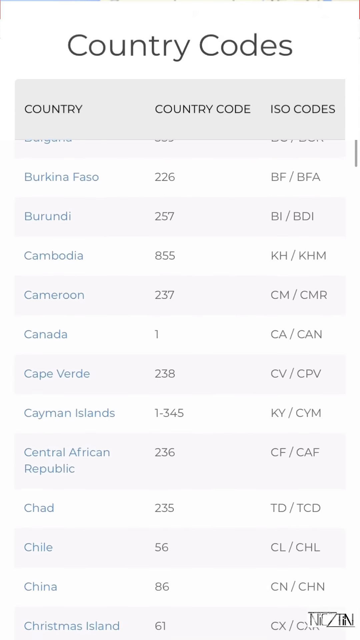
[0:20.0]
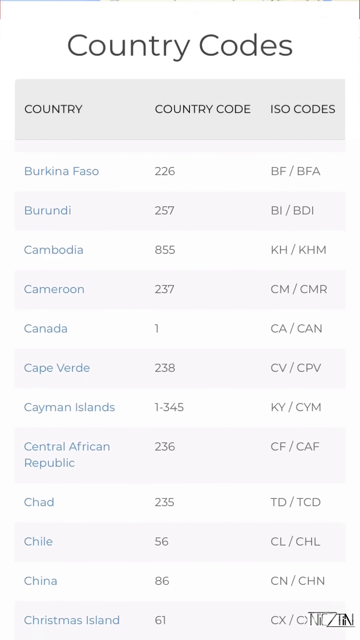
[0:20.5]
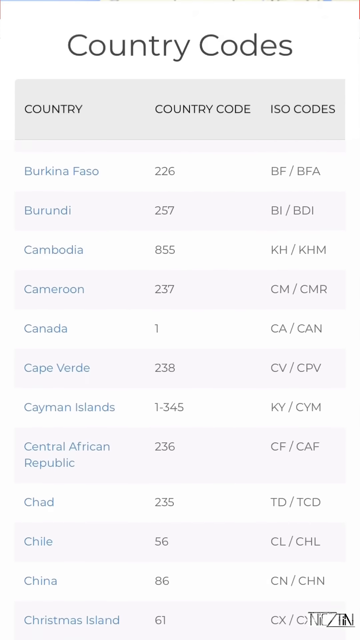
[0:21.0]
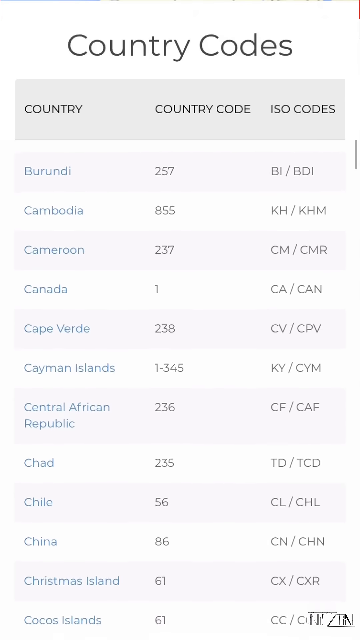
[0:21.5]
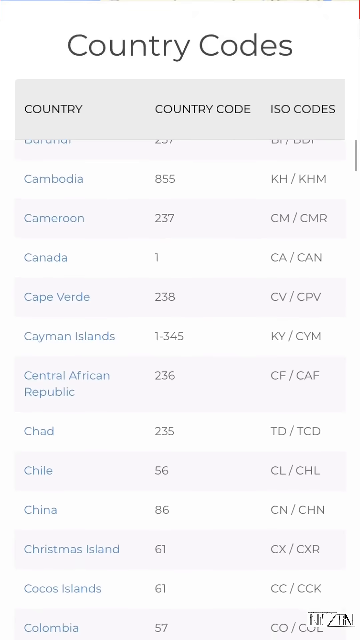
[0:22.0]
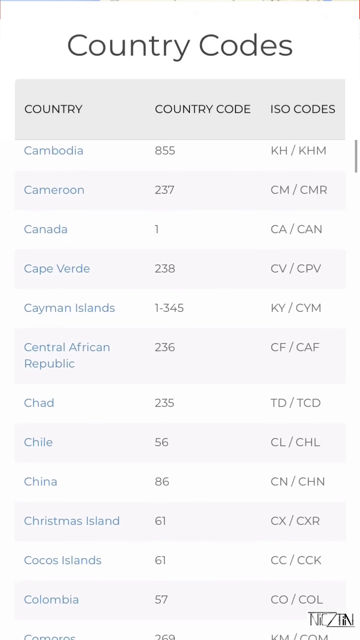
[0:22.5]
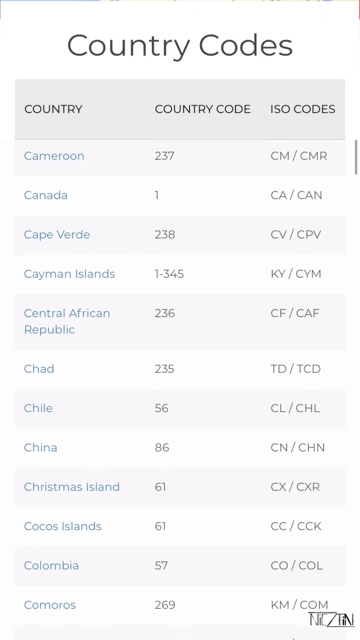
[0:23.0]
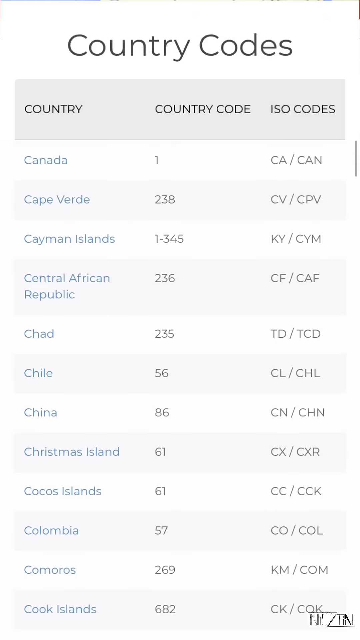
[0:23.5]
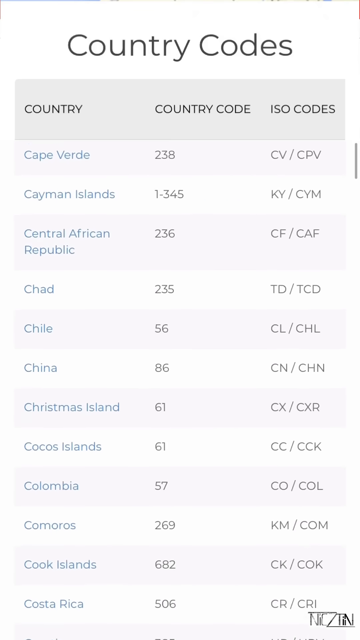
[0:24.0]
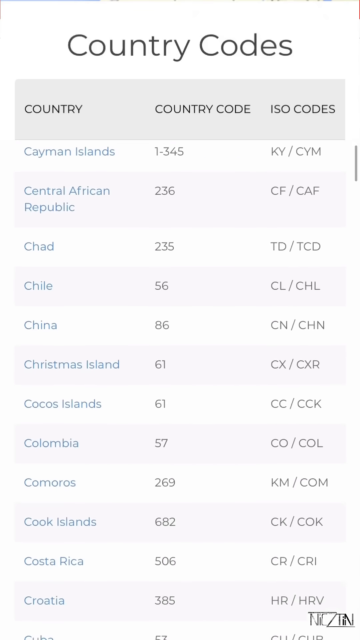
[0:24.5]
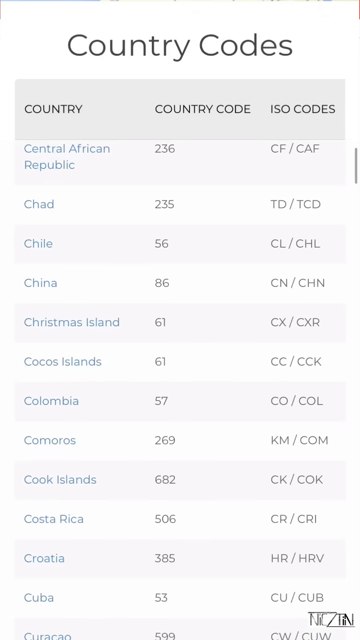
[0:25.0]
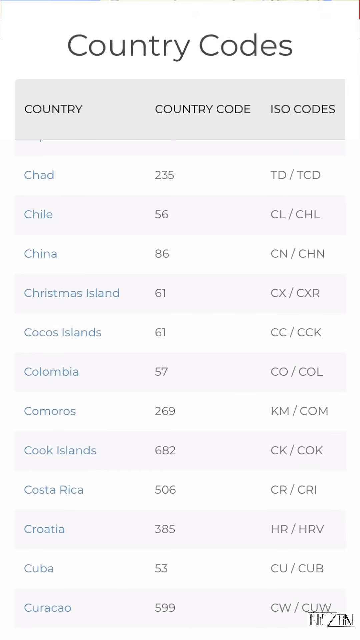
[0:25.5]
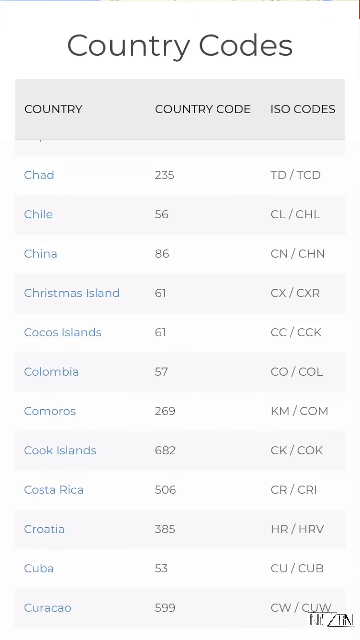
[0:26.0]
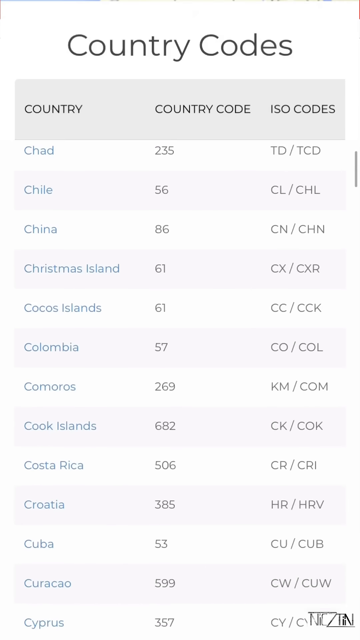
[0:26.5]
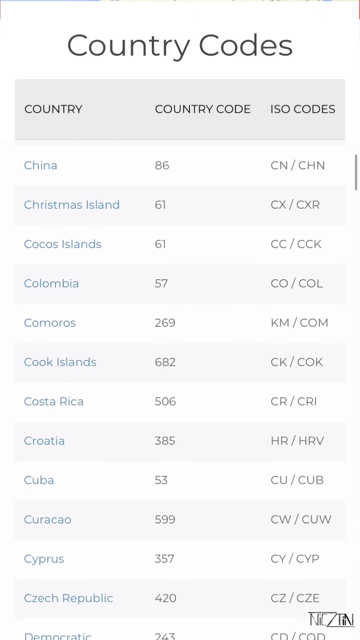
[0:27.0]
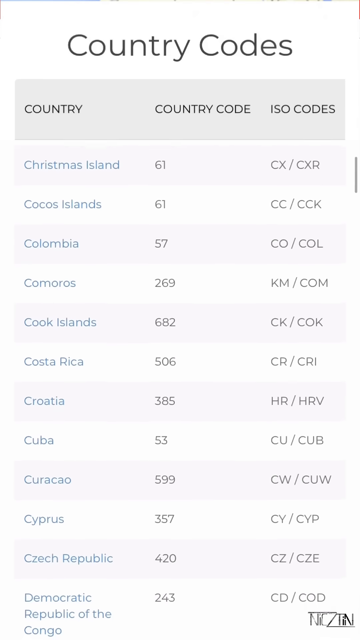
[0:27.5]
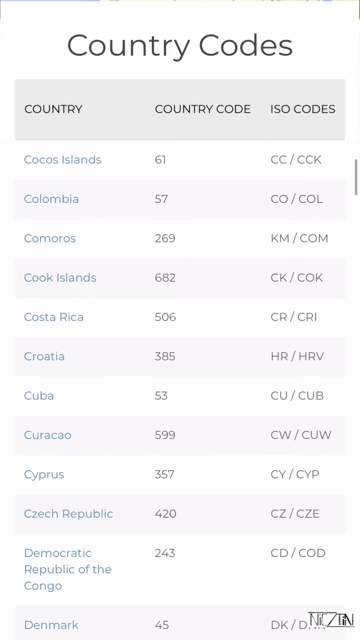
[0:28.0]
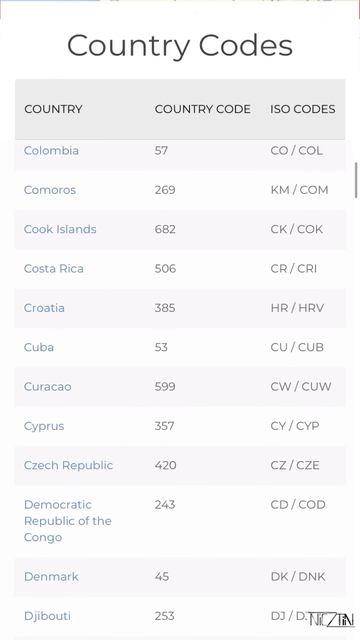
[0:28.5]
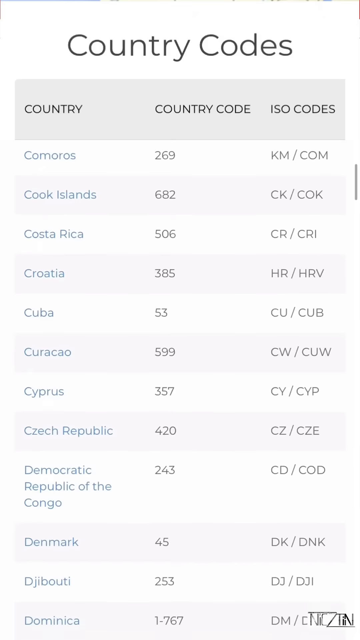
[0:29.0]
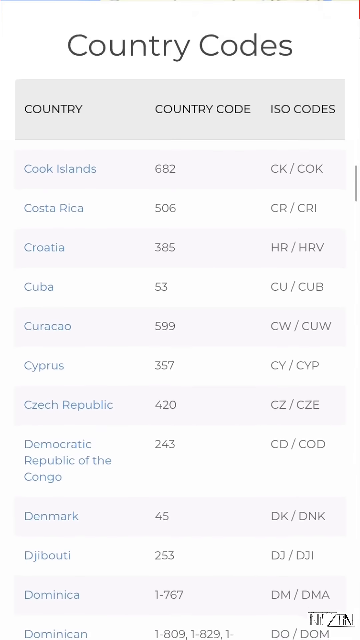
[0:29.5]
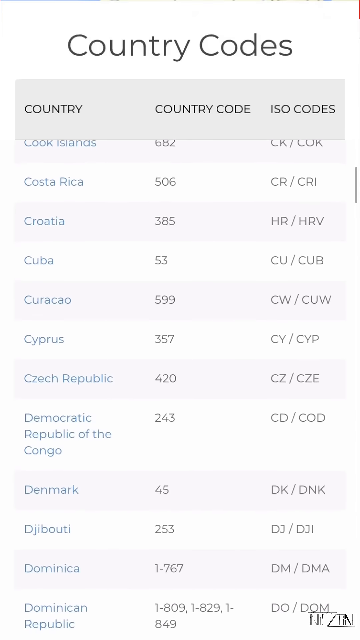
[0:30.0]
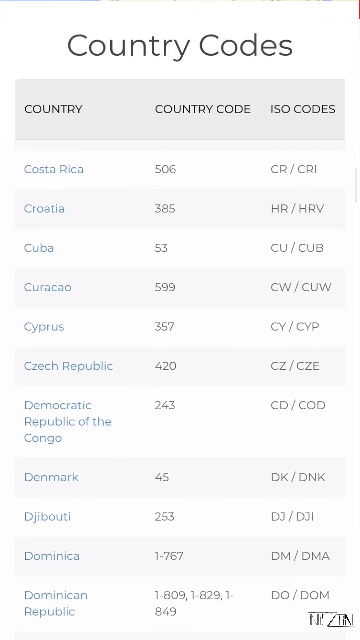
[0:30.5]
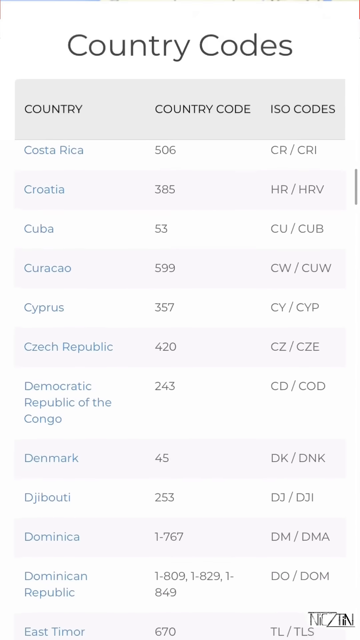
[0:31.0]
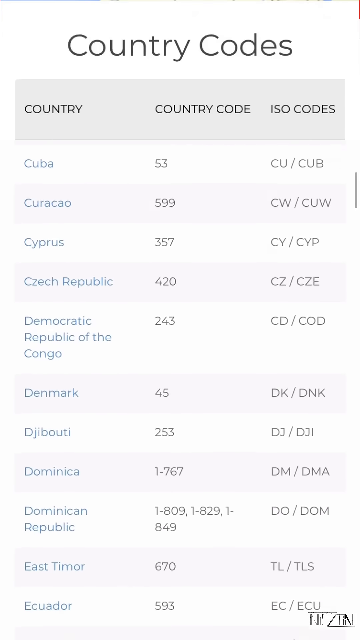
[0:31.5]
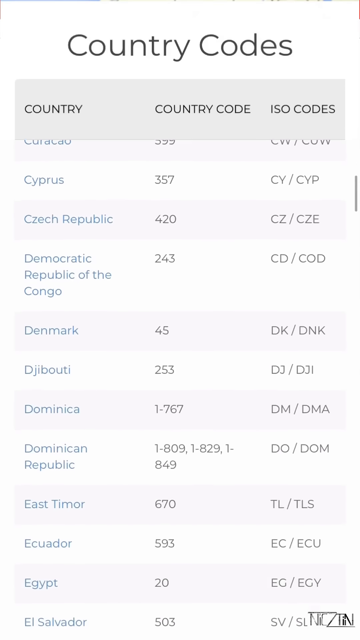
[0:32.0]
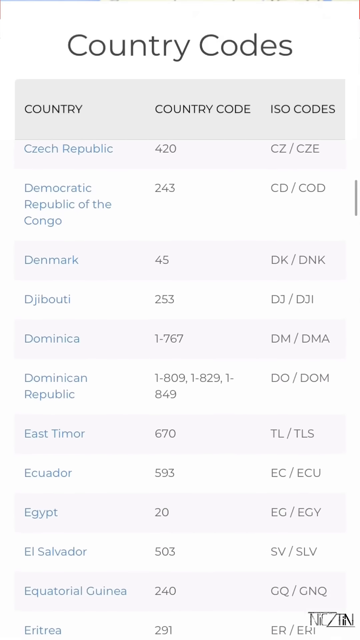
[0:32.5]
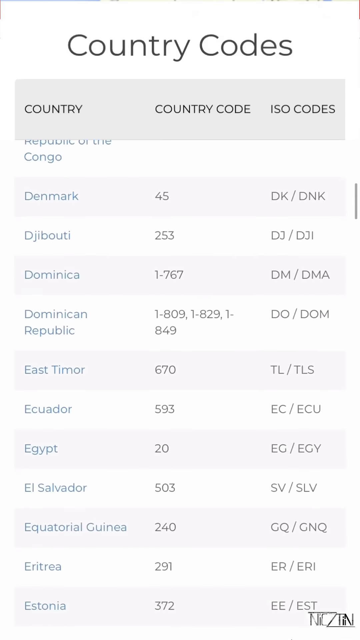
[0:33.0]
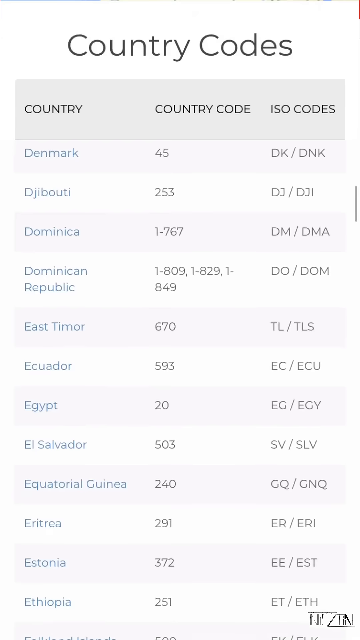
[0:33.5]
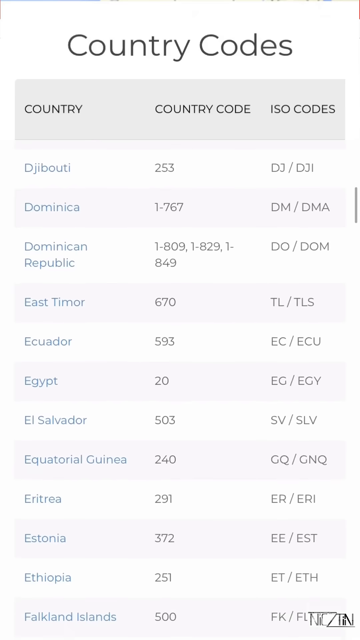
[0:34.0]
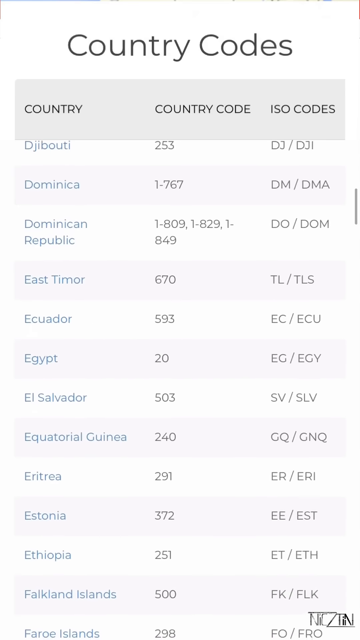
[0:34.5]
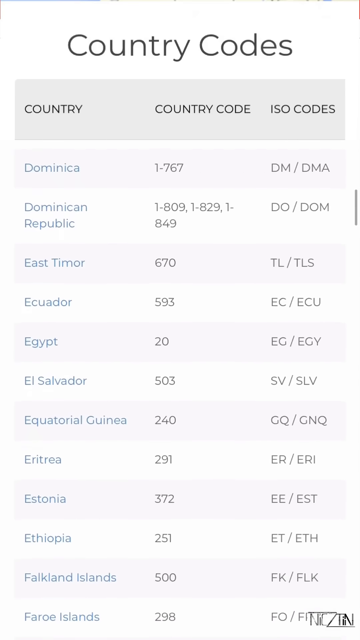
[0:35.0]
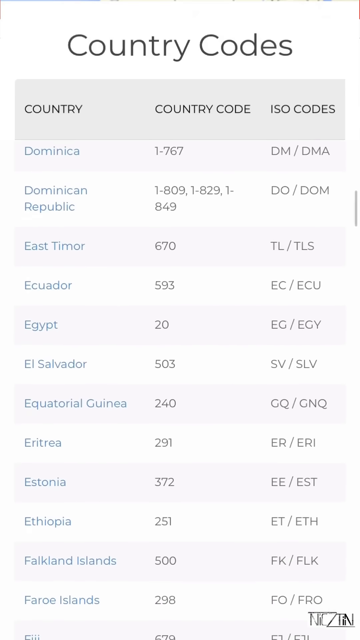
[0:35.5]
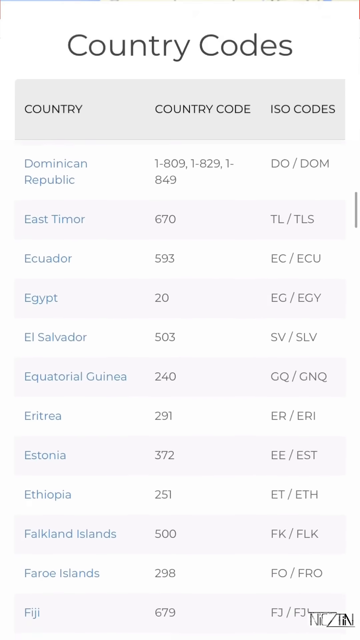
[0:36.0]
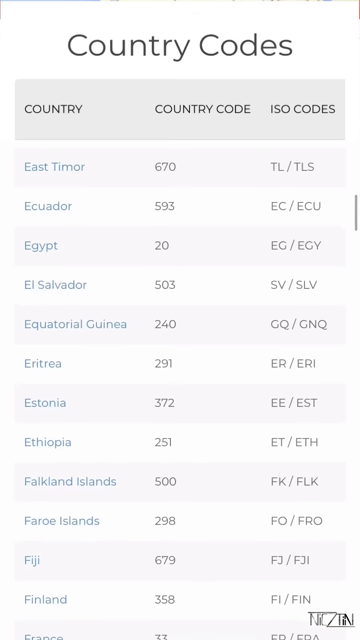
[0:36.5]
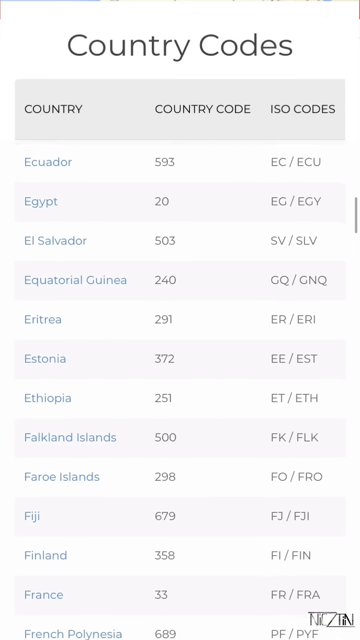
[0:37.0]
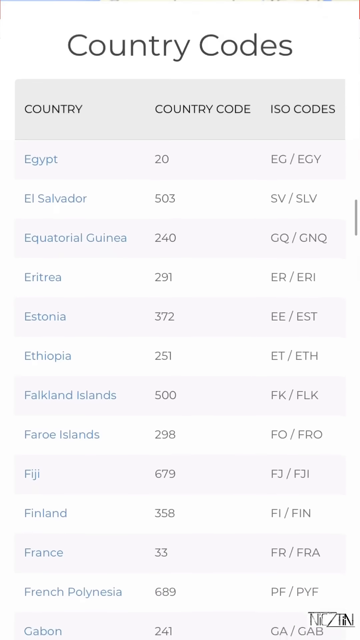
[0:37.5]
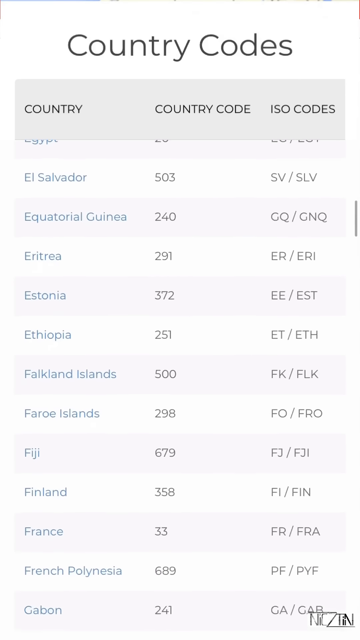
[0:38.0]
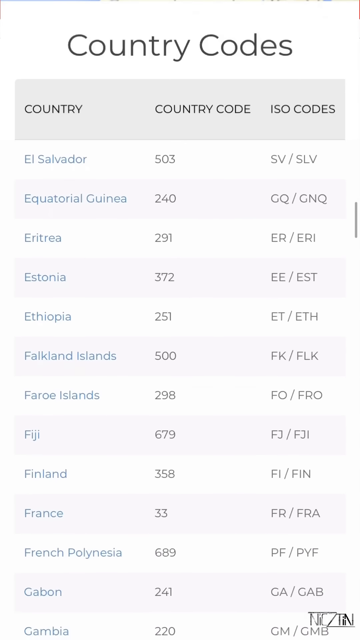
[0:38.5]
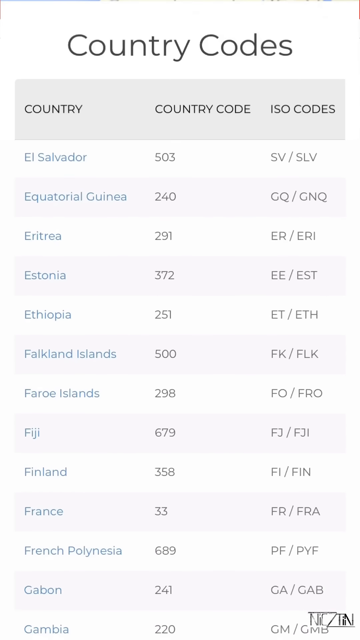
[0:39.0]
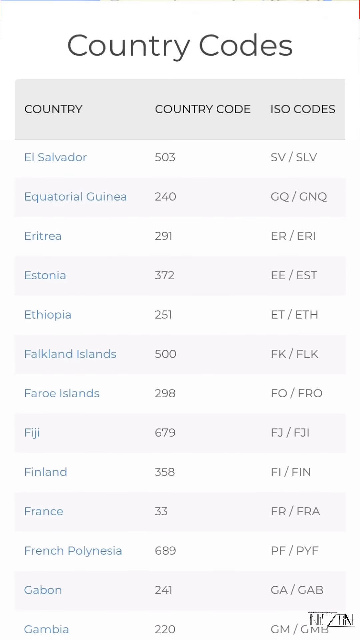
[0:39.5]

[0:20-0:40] The title "country codes" is at the top, with the headings "country," "country code," and "ISO code." The list begins in the B's and scrolls into the C's, passing Cayman Islands, Chad, China, Christmas Island, and Cuba, then continues through the D's and into the E's, reaching Eritrea. Each country has a number for its country code, such as 855 for Cambodia, and a series of letters for its ISO code.